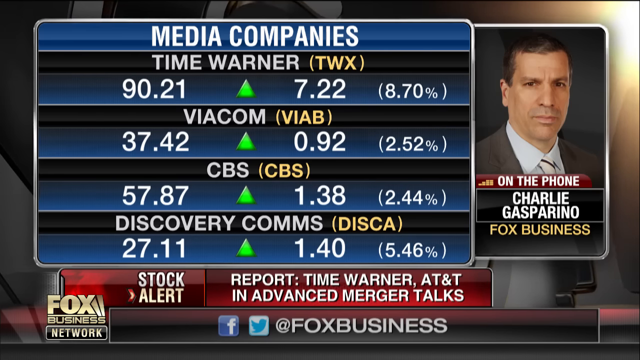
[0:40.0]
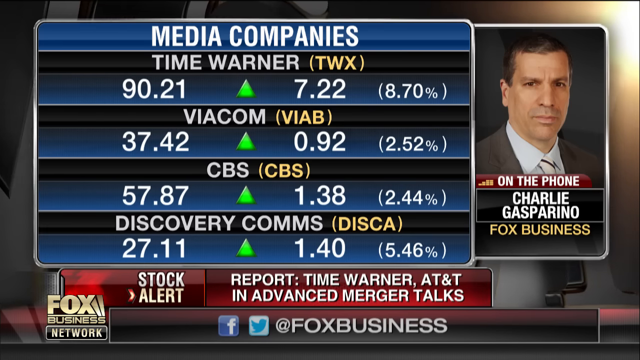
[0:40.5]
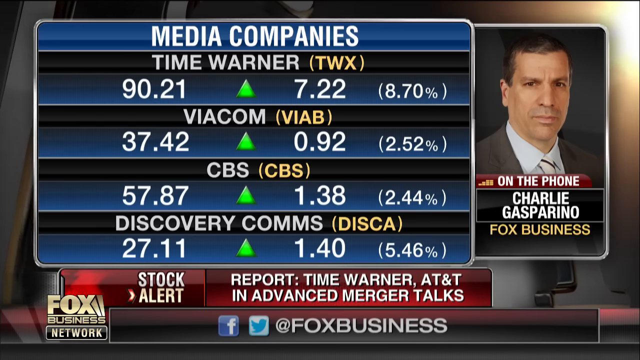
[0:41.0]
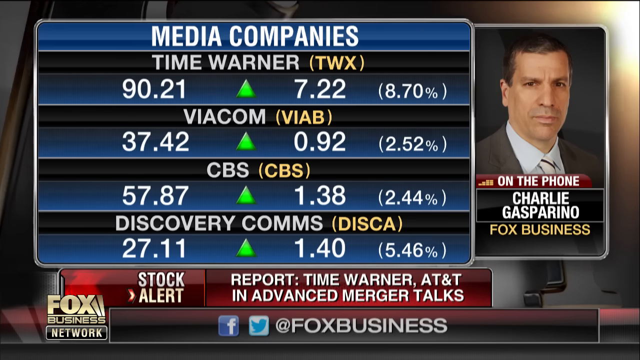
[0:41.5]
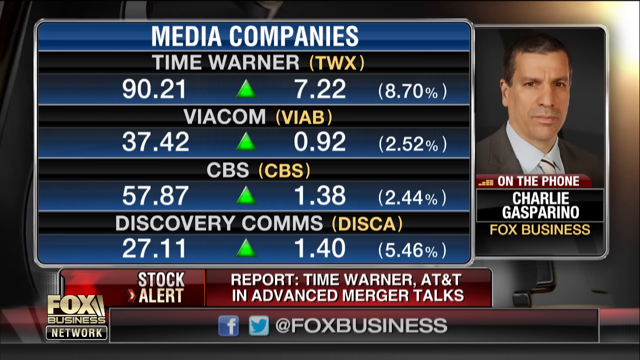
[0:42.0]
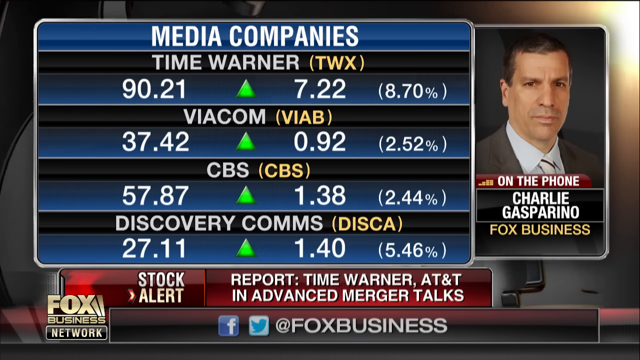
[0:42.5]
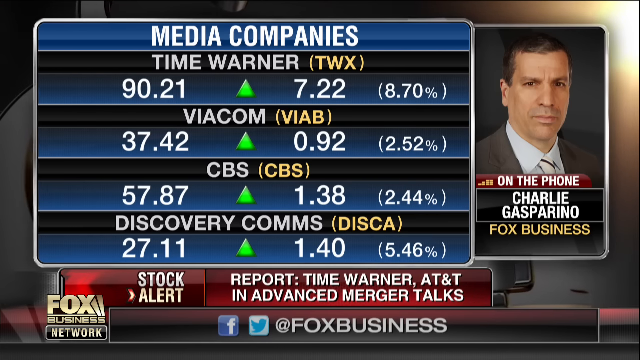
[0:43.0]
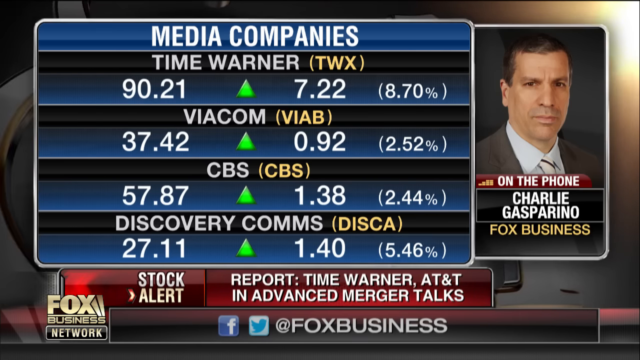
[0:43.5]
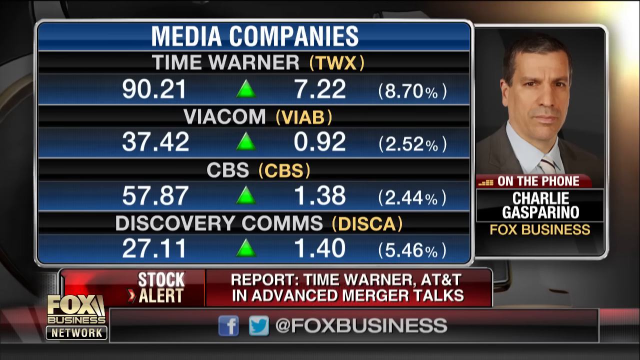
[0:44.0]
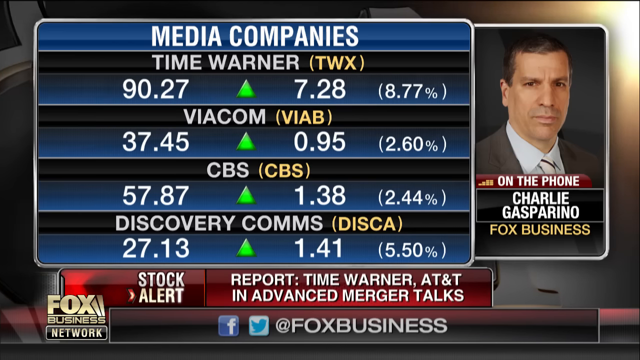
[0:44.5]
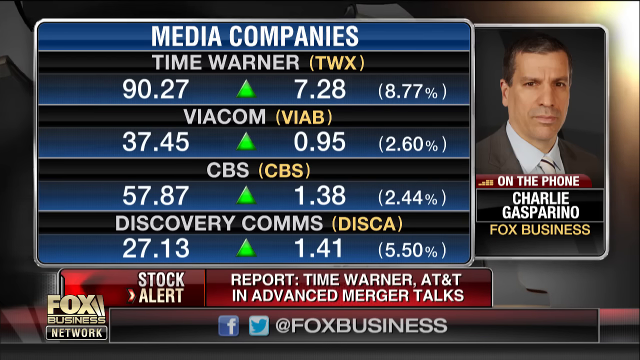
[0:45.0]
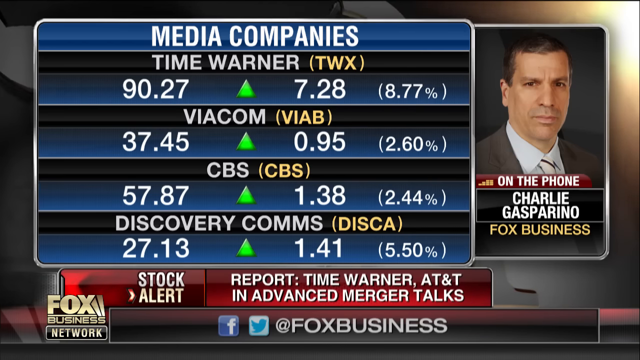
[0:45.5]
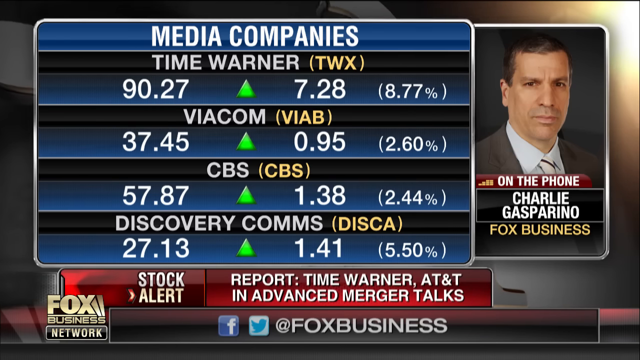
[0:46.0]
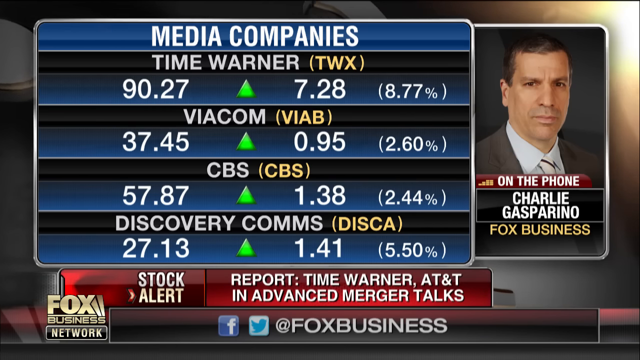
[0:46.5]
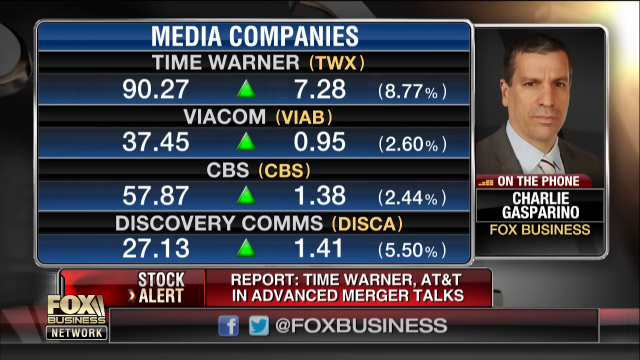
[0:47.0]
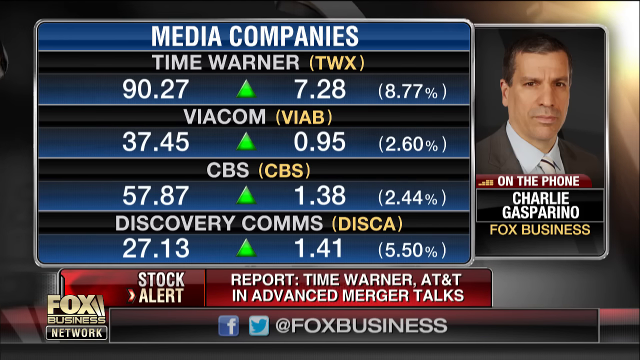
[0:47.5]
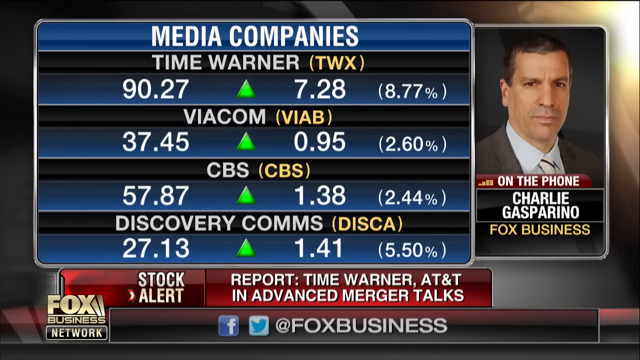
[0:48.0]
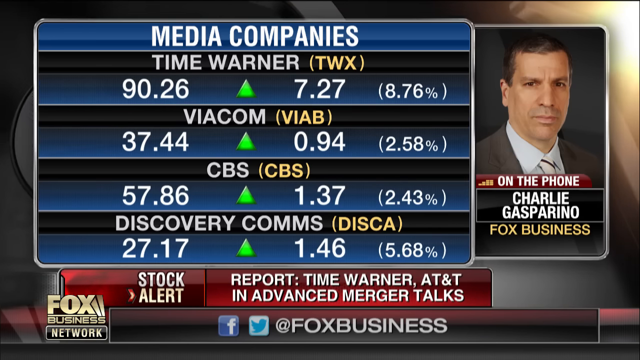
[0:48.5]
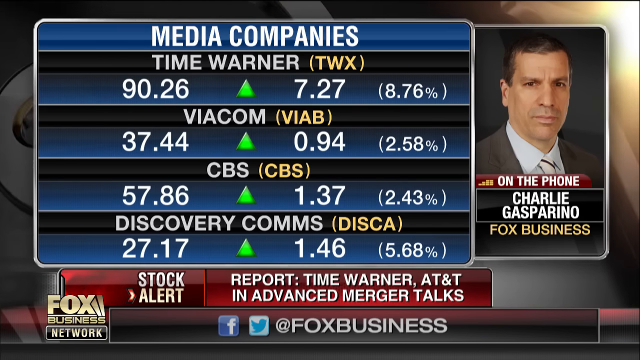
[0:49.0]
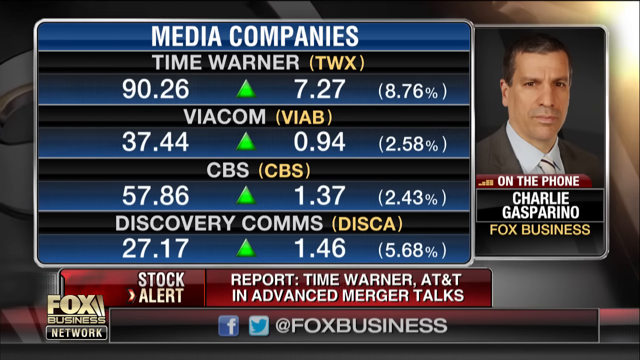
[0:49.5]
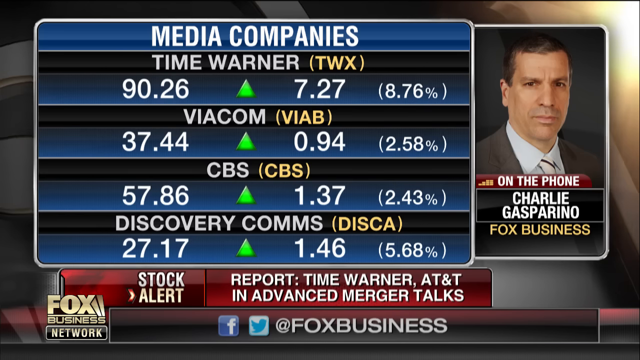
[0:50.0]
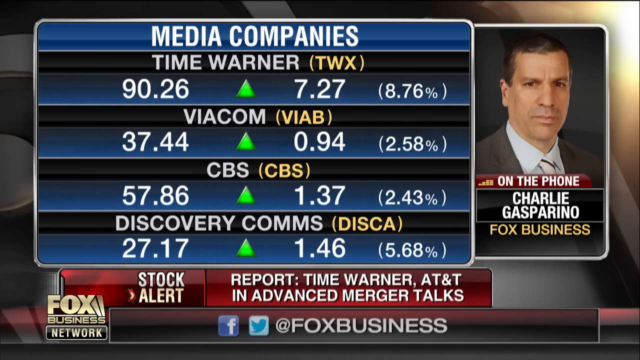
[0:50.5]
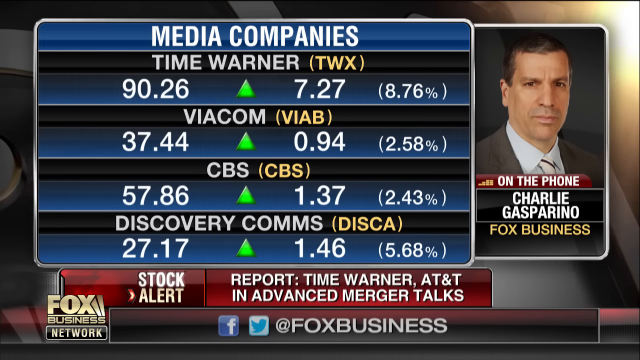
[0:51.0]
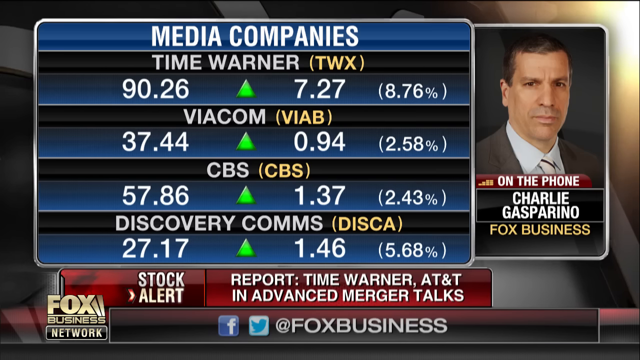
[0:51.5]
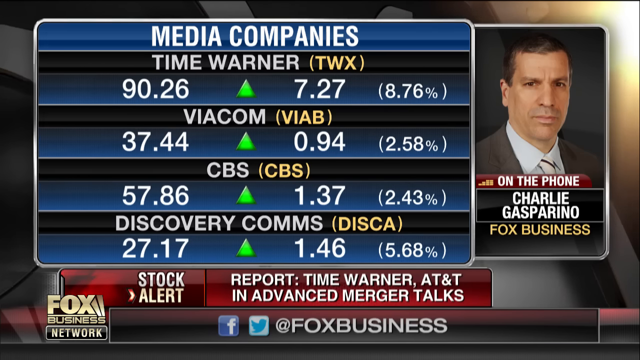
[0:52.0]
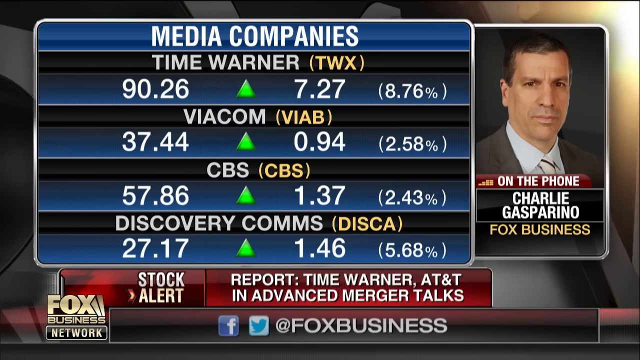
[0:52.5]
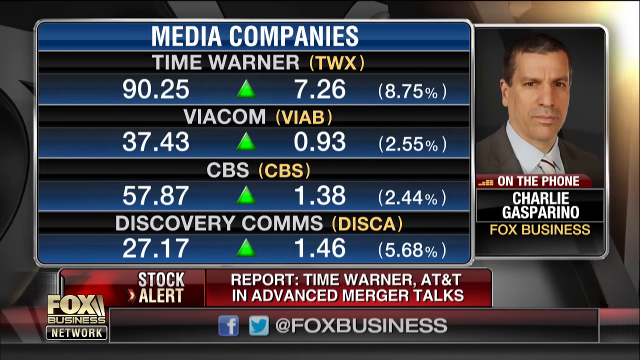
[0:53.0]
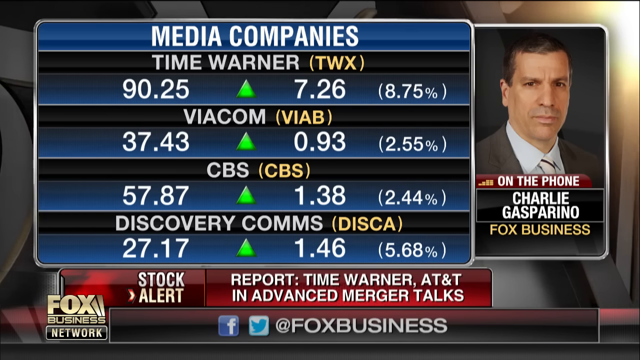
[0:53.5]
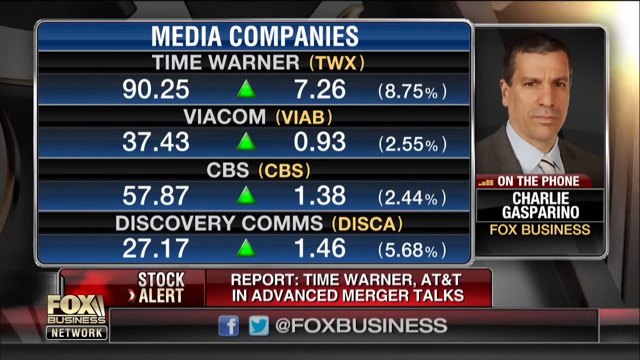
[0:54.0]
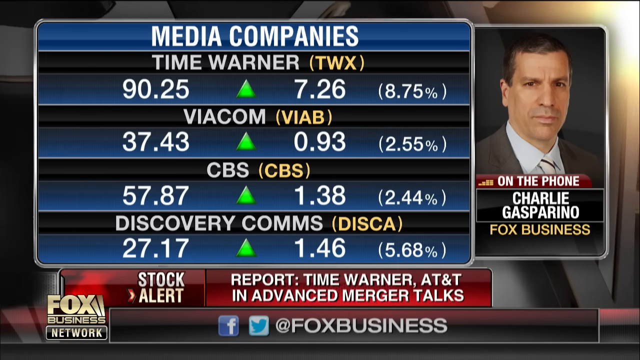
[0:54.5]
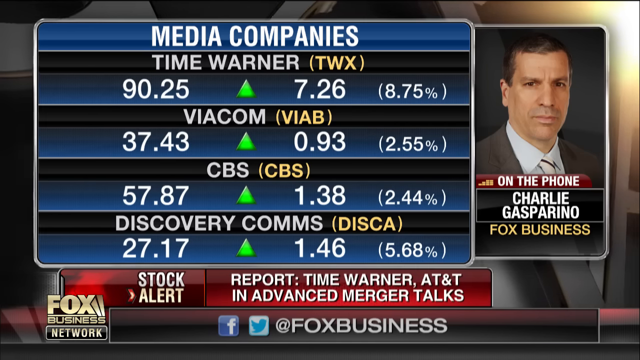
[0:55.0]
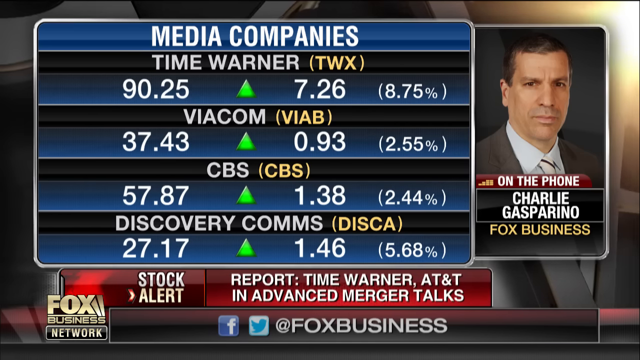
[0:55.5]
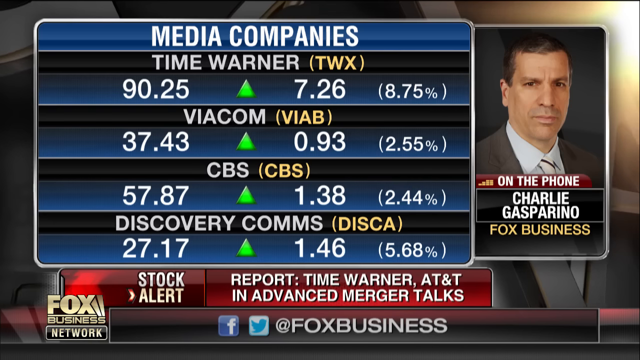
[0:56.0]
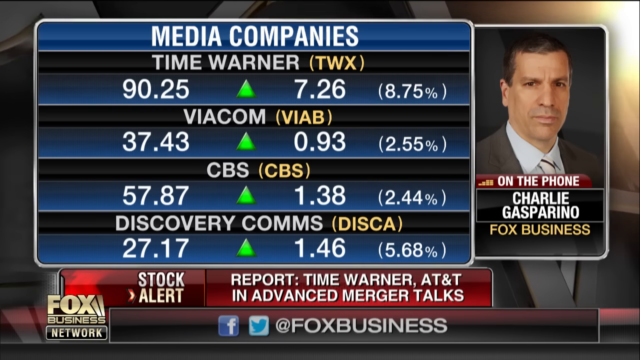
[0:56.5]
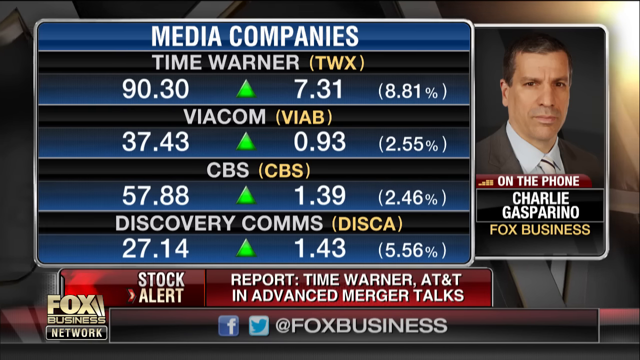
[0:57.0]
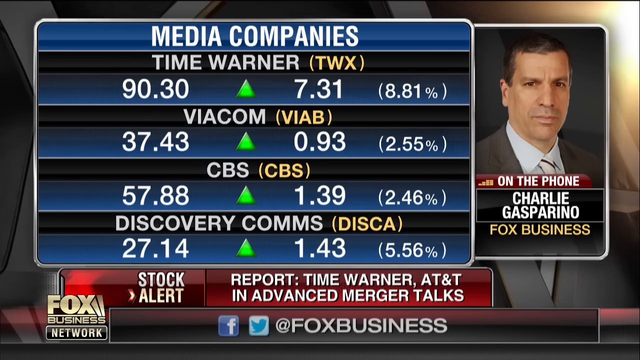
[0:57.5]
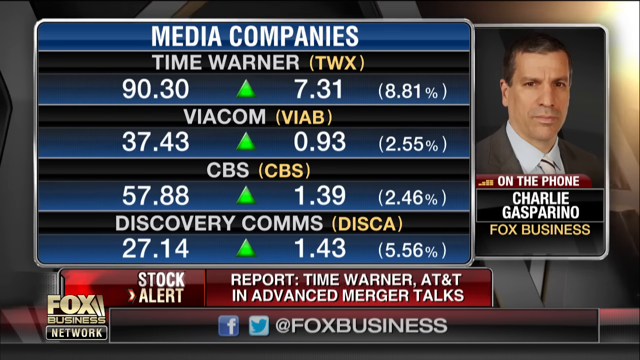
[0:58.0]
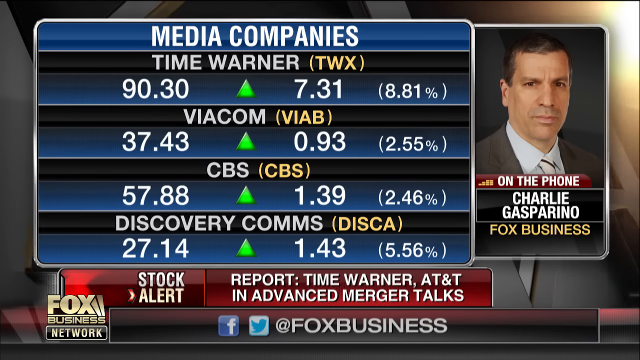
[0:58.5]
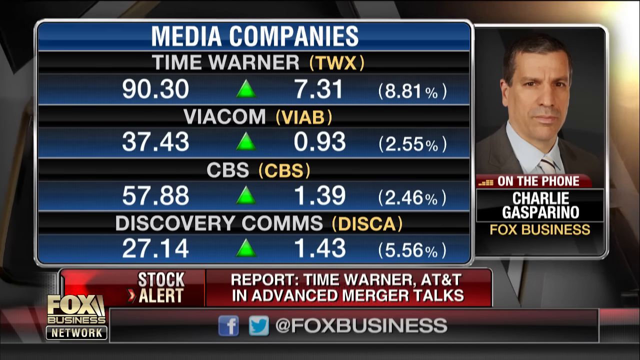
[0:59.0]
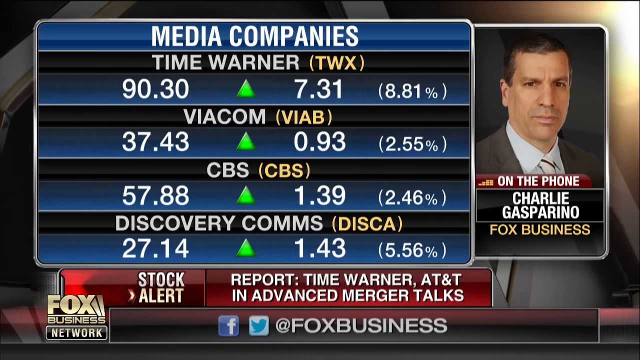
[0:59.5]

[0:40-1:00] The background with the three-dimensional letters continues to rotate and move to the left, and the words "stock alert" on the ticker at the bottom glisten. In the Media Companies window the numbers fluctuate to Time Warner 90.27, up 7.28, (8.77); Viacom 37.45, up 0.95, (2.60%); CBS 57.87, up 1.38, (2.44); Discovery Comms 27.13, up 1.41, (5.50%). They then change to Time Warner 90.26, up 7.27, (8.76%); Viacom 37.44, up 0.94, (2.58%); CBS 57.86, up 1.37, (2.43%); Discovery Comms 27.17, up 1.46, (5.68%). Next they turn to Time Warner 90.25, up 7.26, (8.75%); Viacom 37.43, up 0.93, (2.55%); CBS 57.87, up 1.38, (2.44%); Discovery Comms 27.17, up 1.46, (5.68). The background continues to rotate, and the numbers fluctuate to Time Warner 90.30, up 7.31, (8.81%); Viacom 37.43, up 0.93, (2.55%); CBS 57.88, up 1.39, (2.46%); Discovery Comms 27.14, up 1.43, (5.56%).